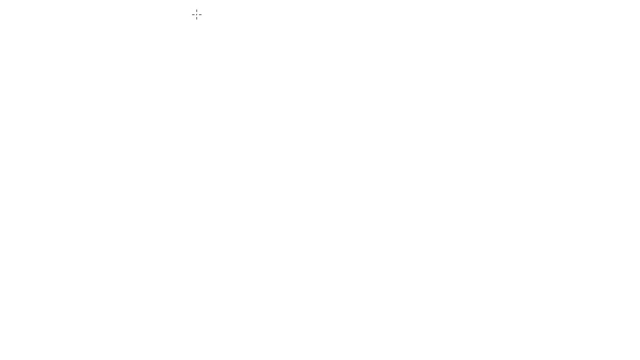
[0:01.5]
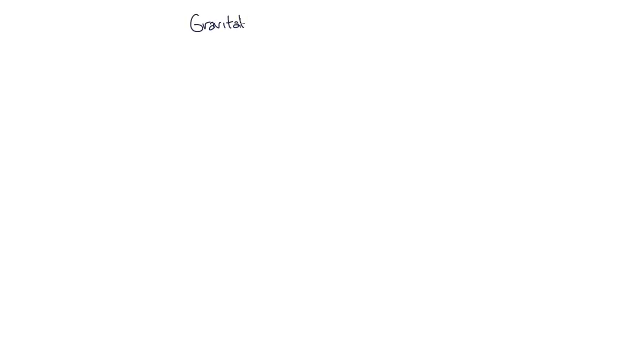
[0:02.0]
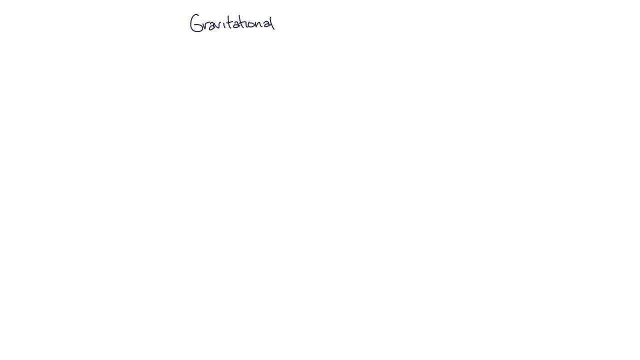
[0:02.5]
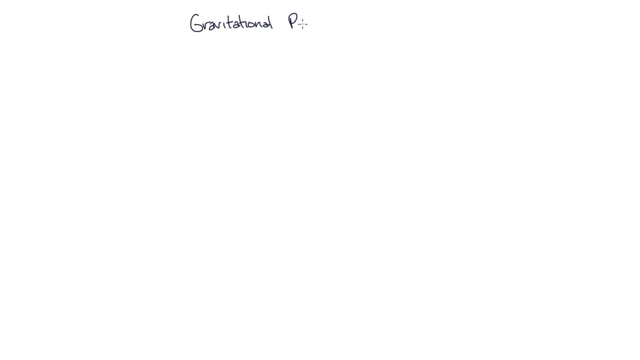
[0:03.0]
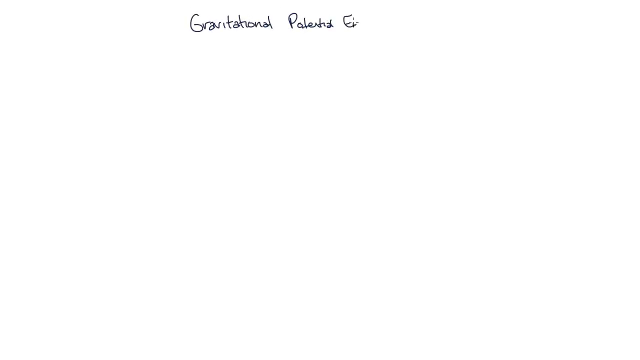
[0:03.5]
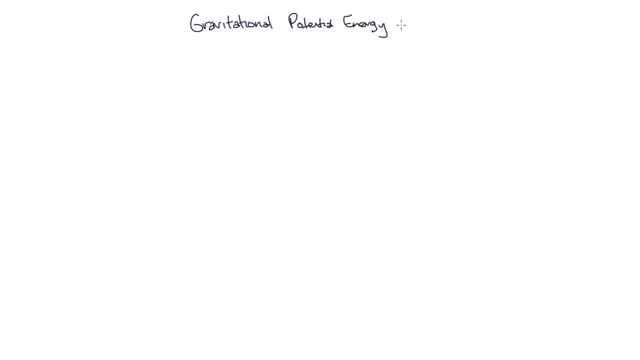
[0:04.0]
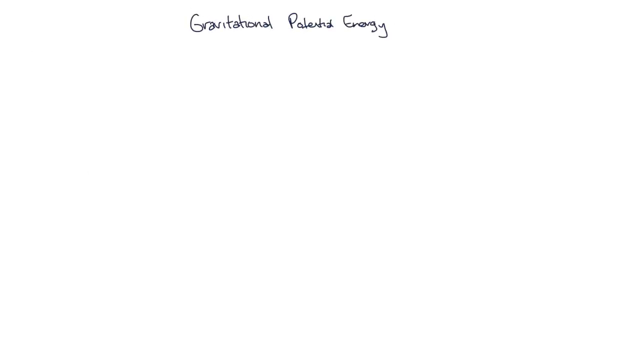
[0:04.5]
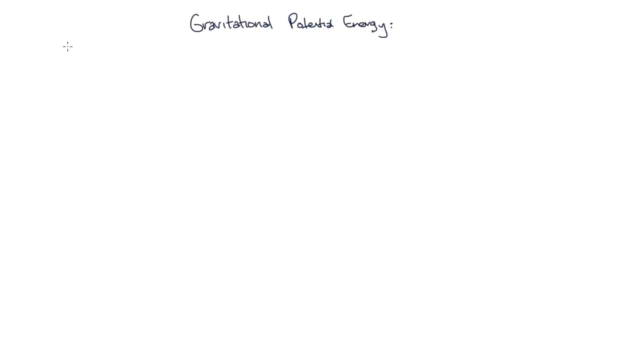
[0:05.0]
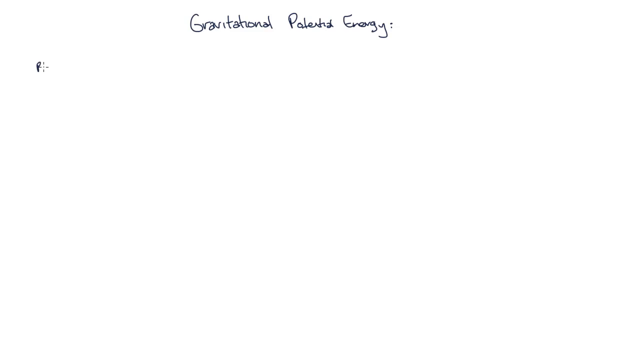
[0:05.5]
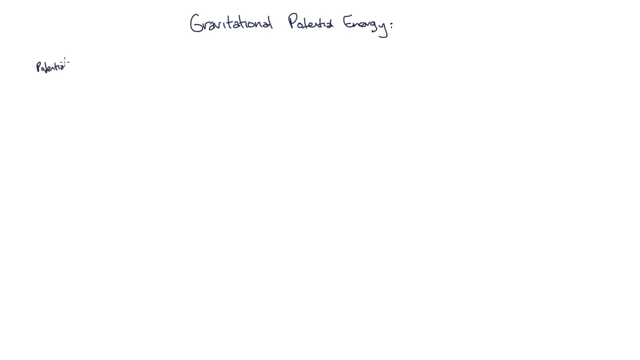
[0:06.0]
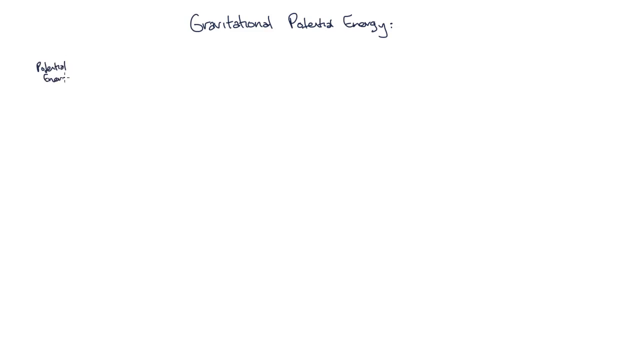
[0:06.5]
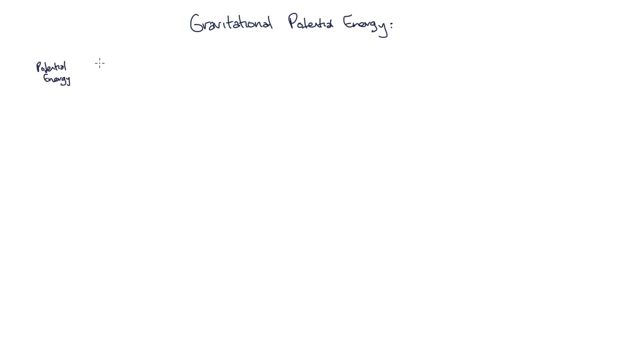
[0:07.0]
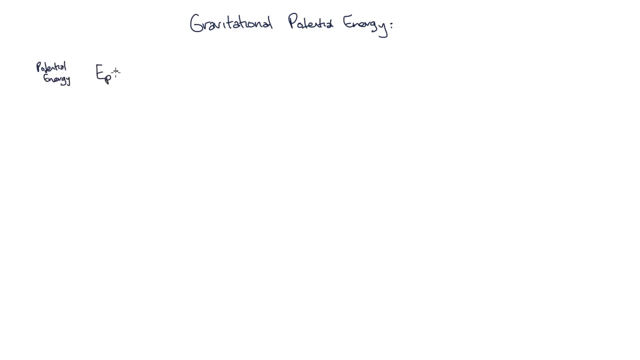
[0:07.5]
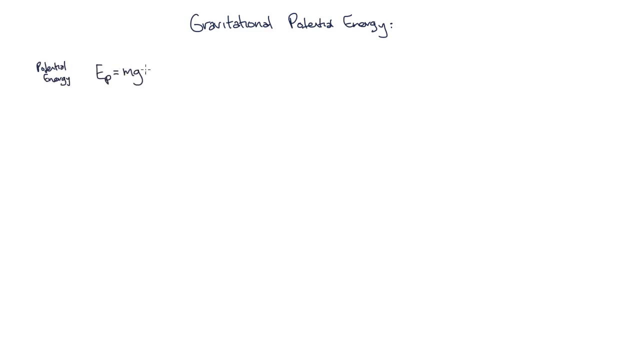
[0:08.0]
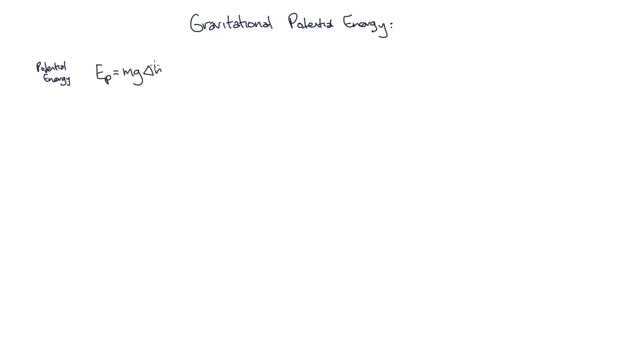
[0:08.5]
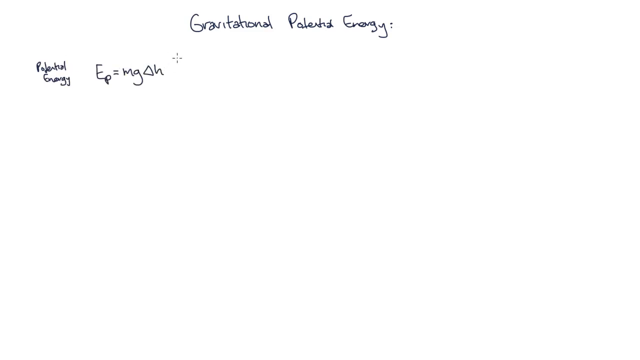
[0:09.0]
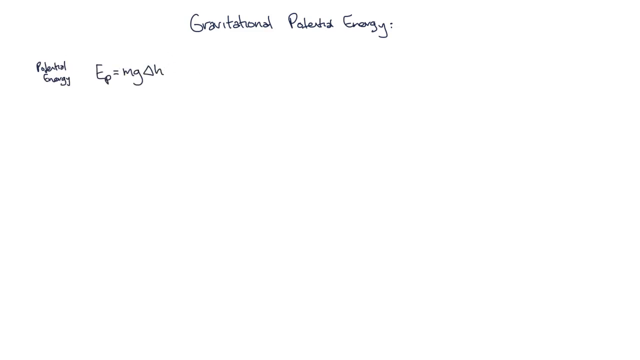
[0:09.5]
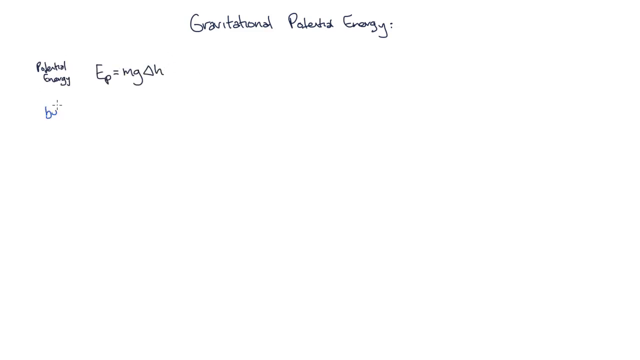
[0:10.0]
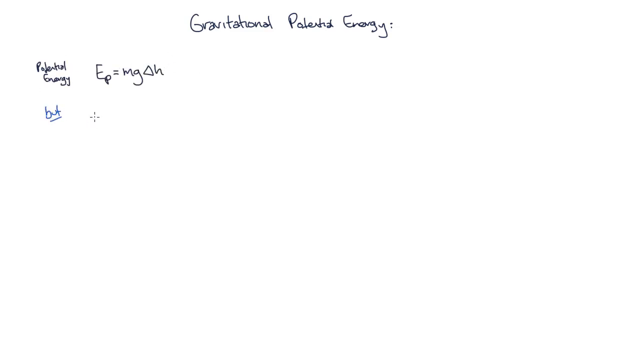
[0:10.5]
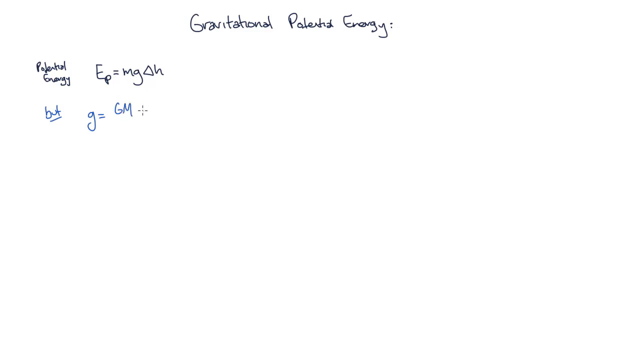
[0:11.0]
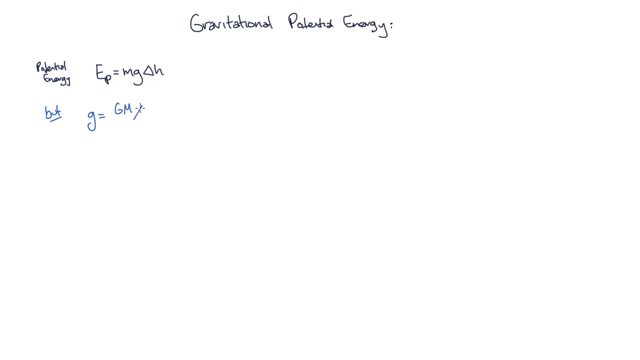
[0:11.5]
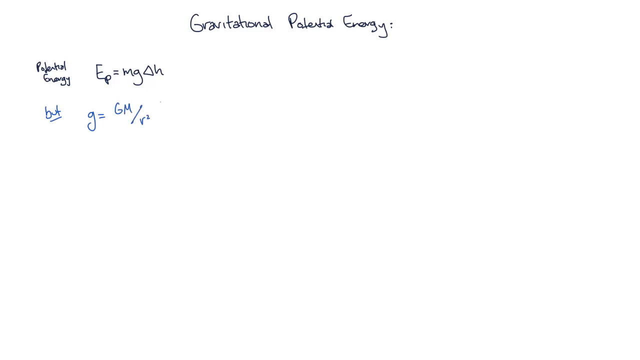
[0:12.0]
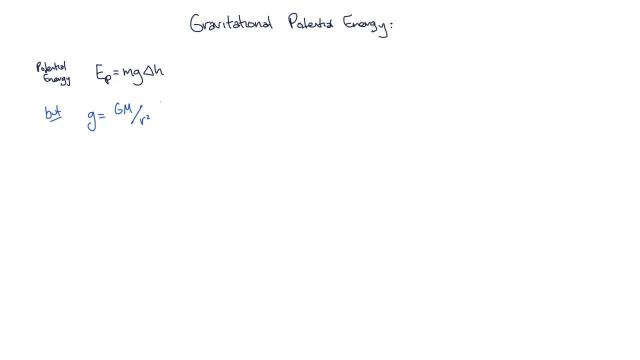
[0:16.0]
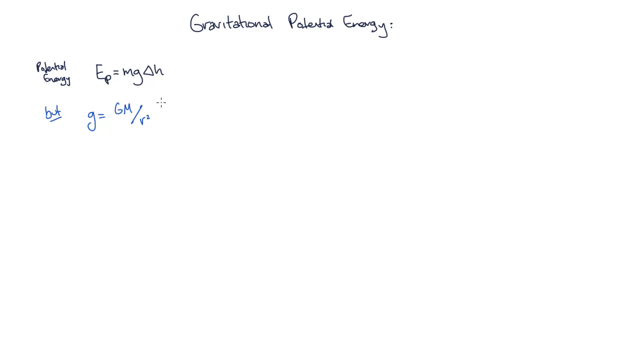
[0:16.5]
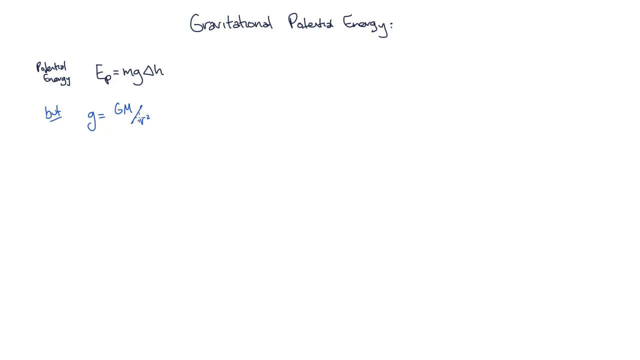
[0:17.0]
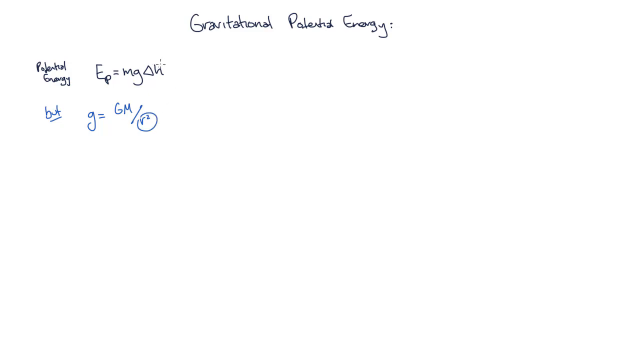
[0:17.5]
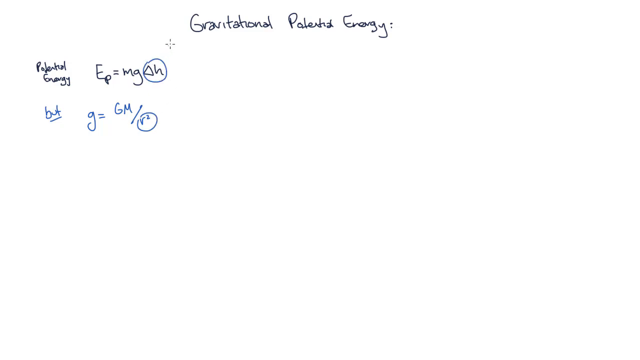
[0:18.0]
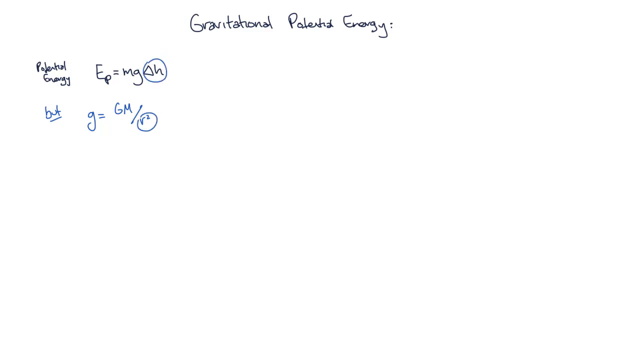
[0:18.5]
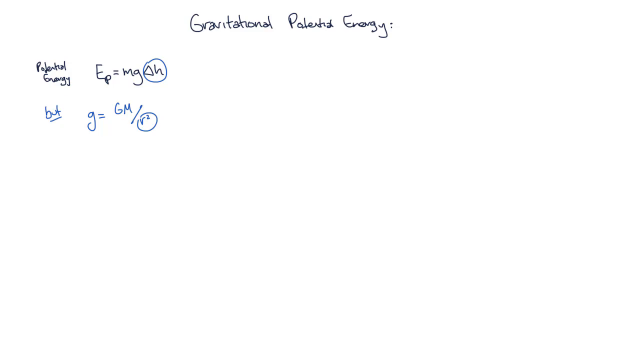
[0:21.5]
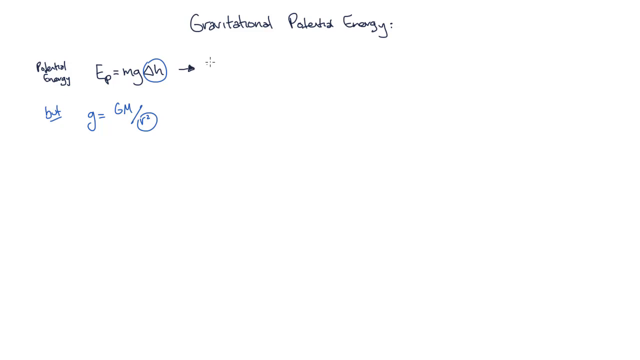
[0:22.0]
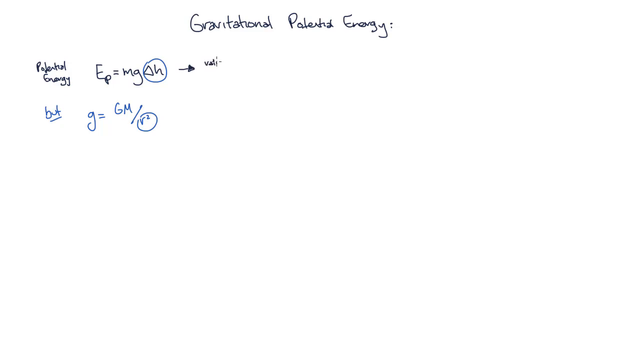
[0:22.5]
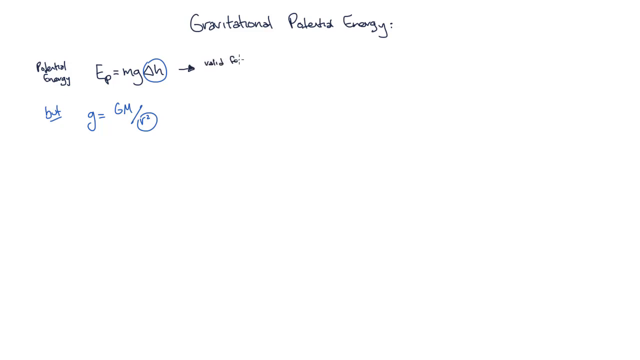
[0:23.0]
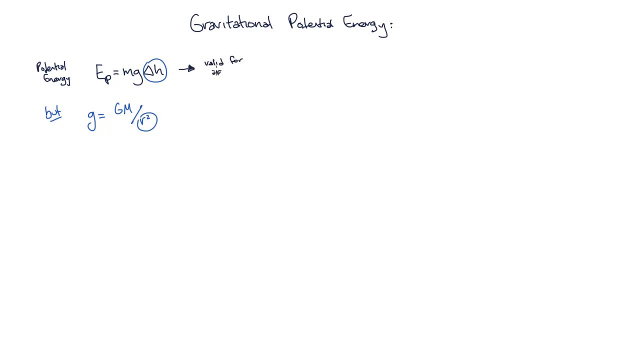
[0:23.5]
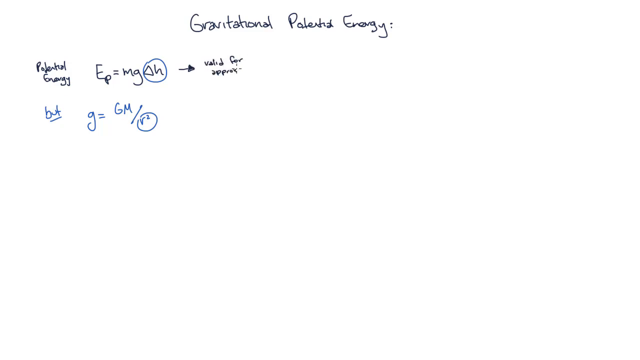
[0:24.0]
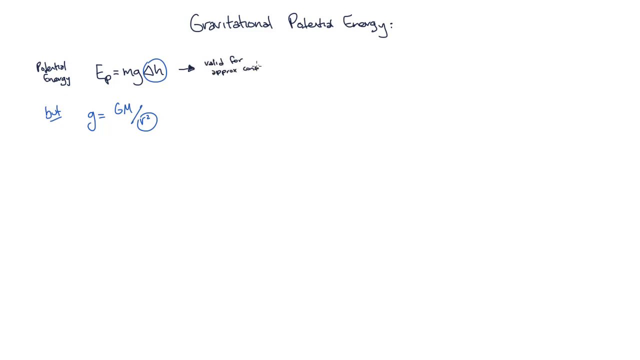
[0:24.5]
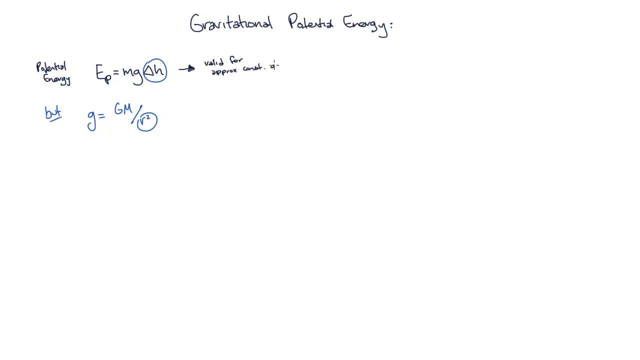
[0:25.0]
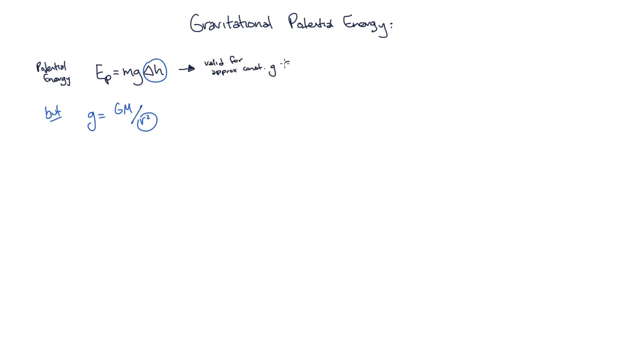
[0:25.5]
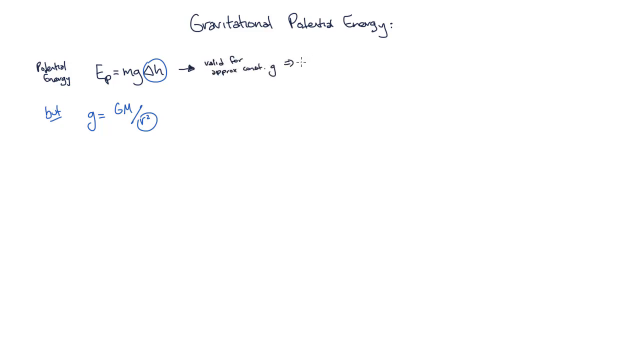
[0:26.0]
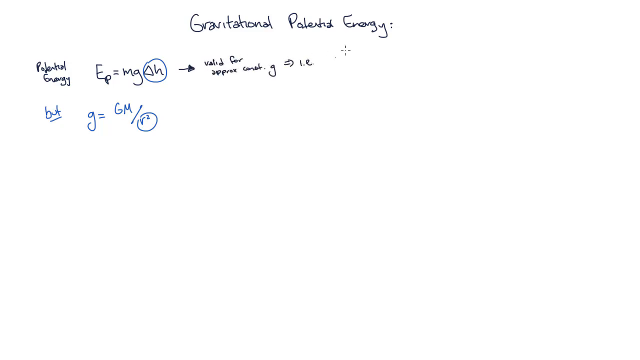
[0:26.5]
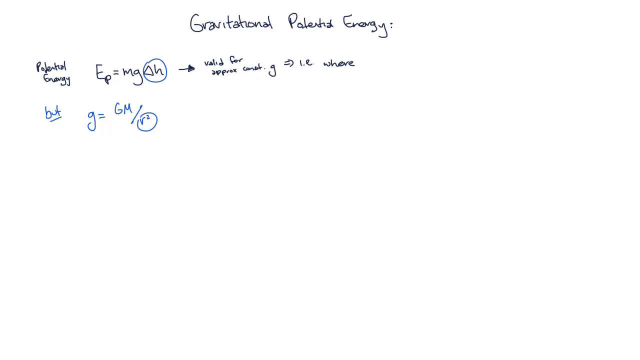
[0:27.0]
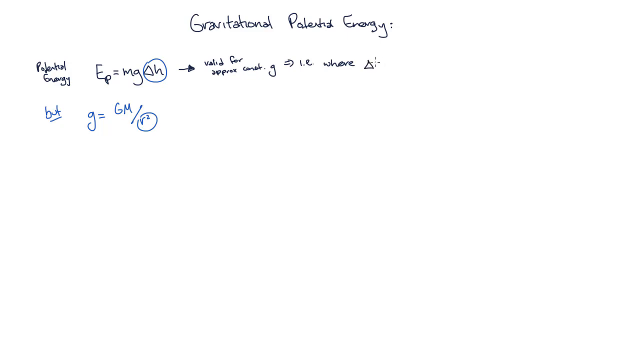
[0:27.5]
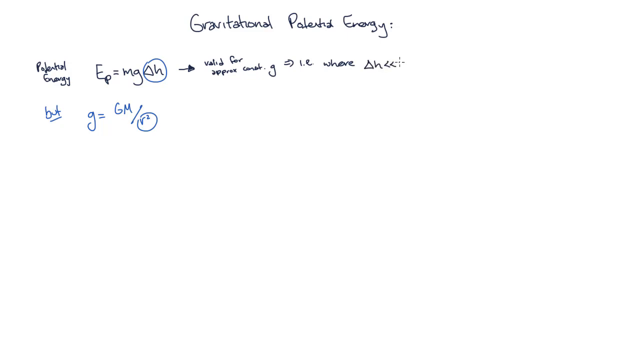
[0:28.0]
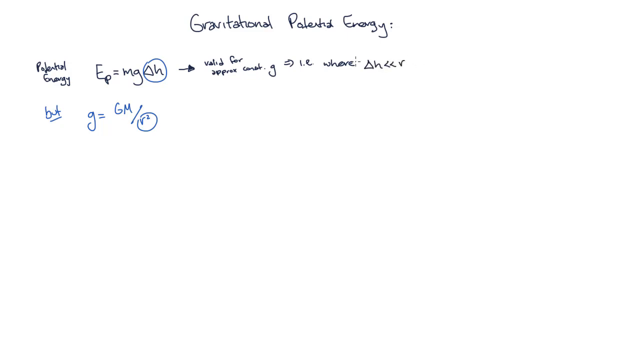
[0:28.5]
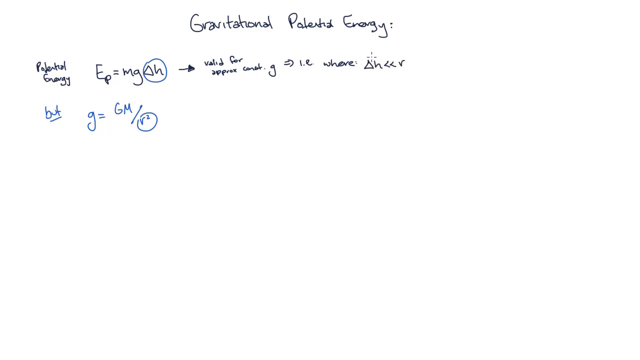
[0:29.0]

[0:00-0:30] A diagram about gravitational potential energy shows its key concepts: that it is position-dependent, and that it depends on height and mass. The diagram also shows the formula, in which m is the mass of the object, g is the acceleration due to gravity, approximately 9.8 meters near Earth's surface, and h is the height of the object above the reference point. An example involves a box that falls.